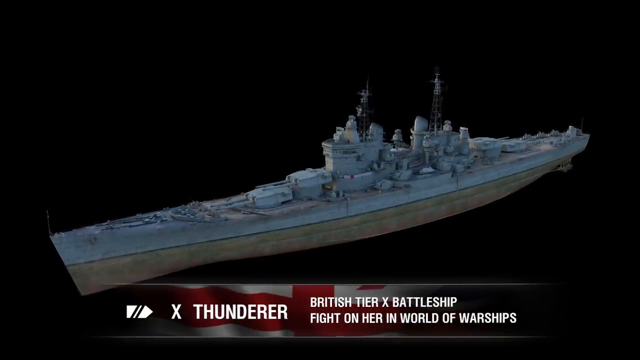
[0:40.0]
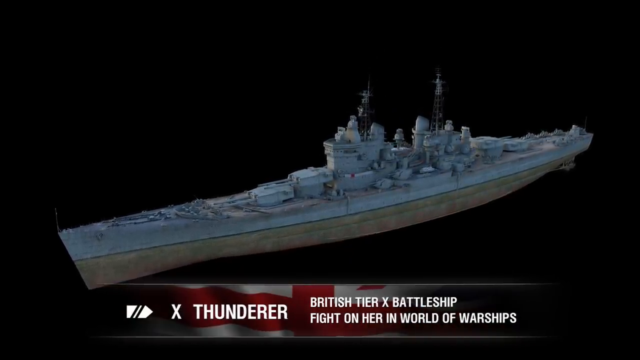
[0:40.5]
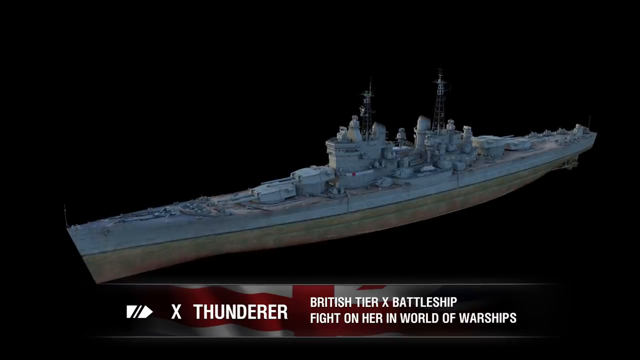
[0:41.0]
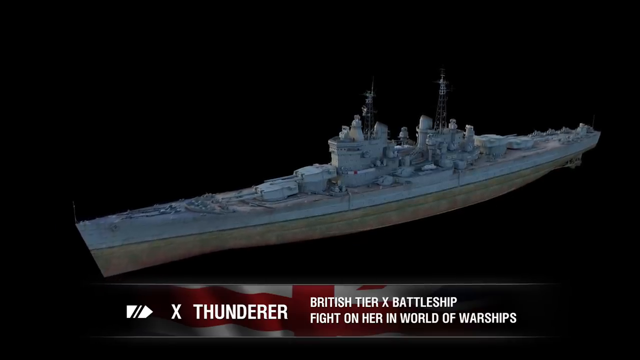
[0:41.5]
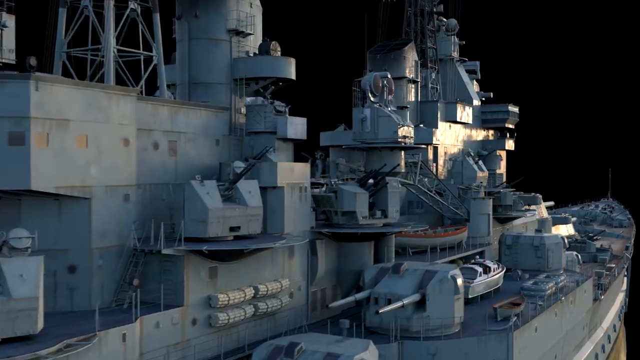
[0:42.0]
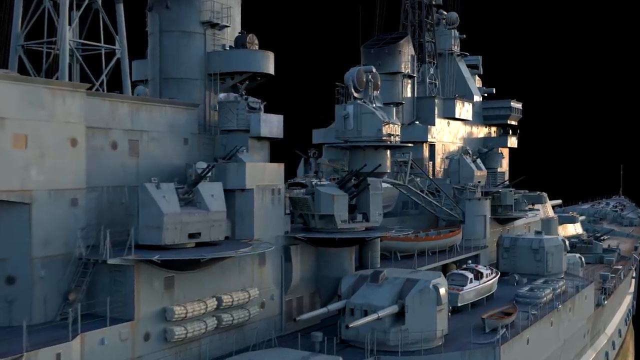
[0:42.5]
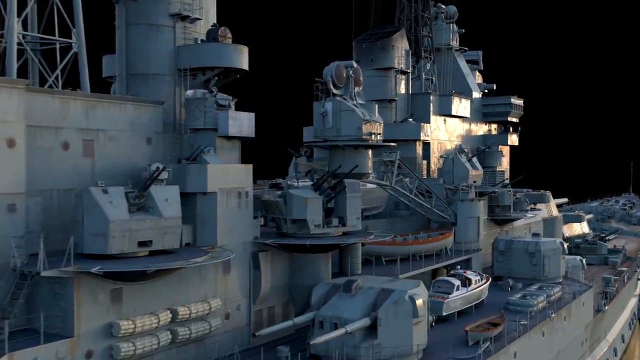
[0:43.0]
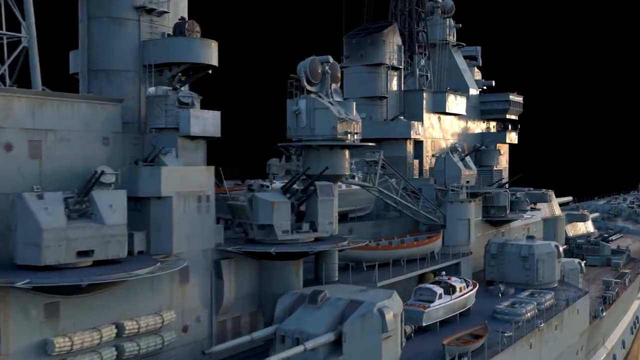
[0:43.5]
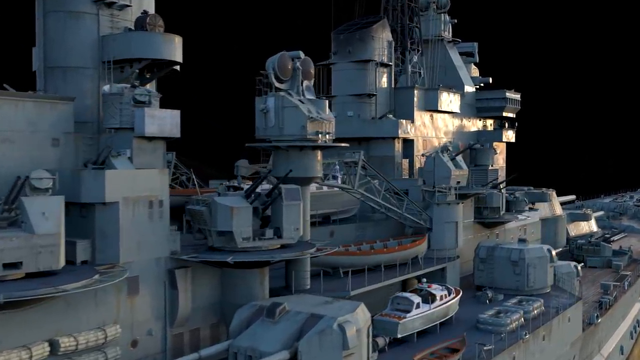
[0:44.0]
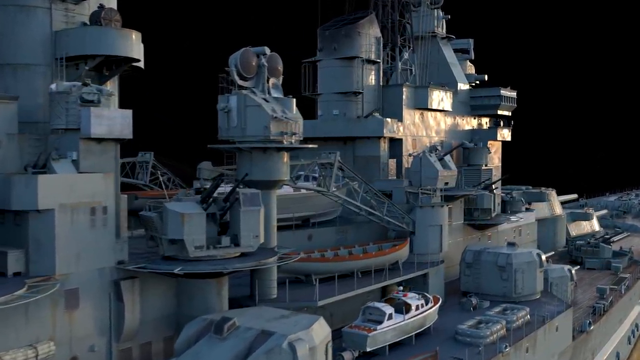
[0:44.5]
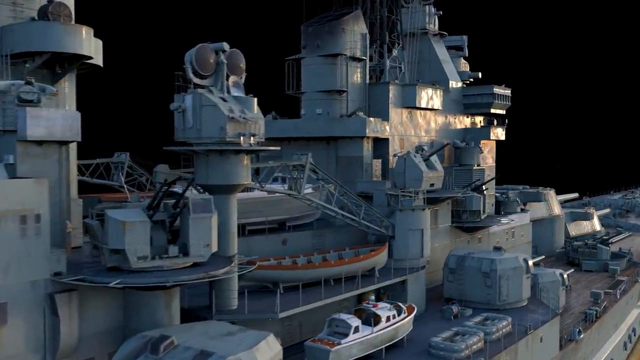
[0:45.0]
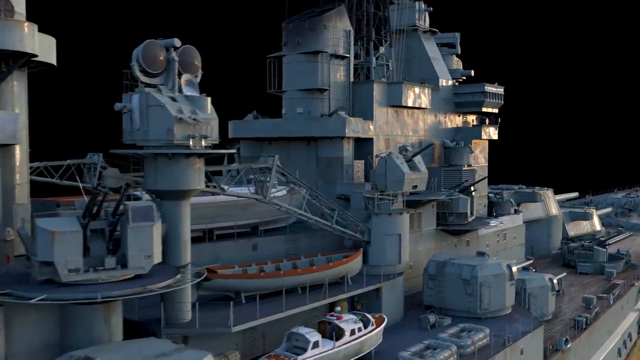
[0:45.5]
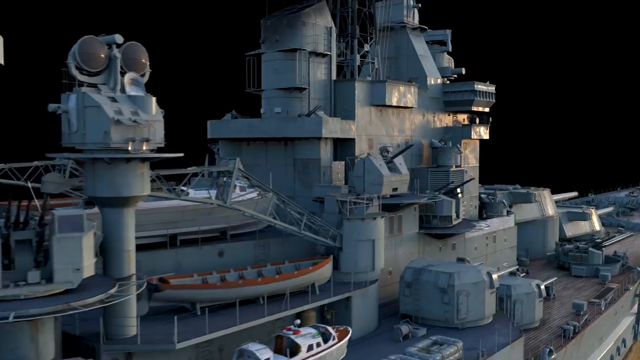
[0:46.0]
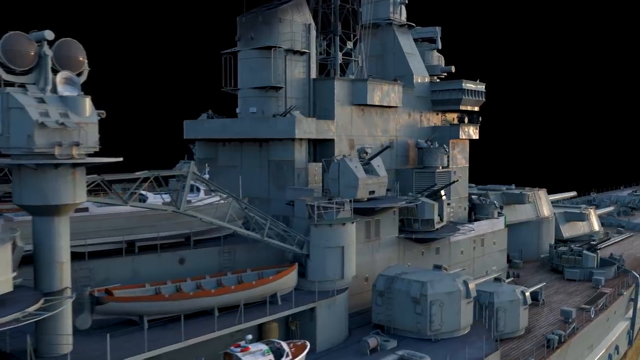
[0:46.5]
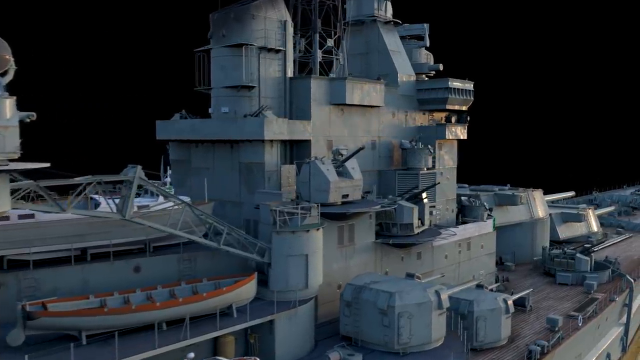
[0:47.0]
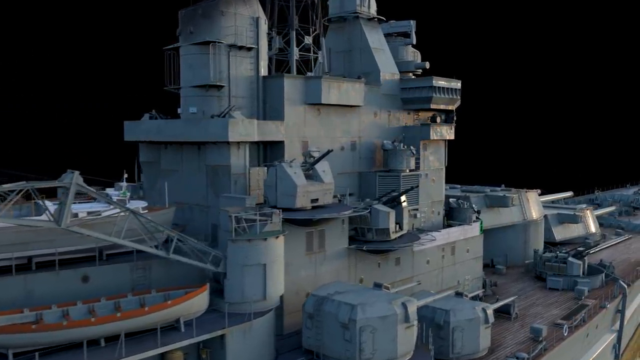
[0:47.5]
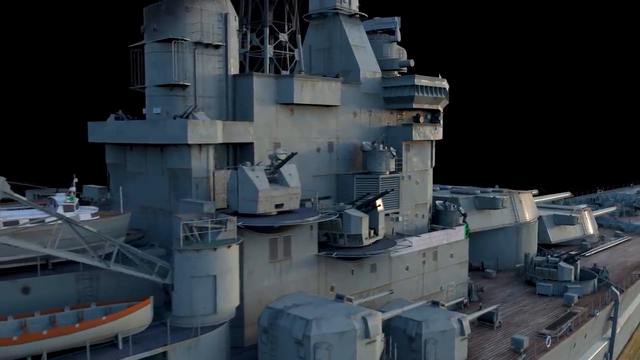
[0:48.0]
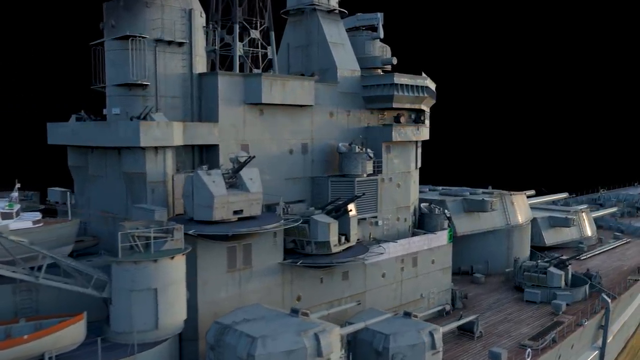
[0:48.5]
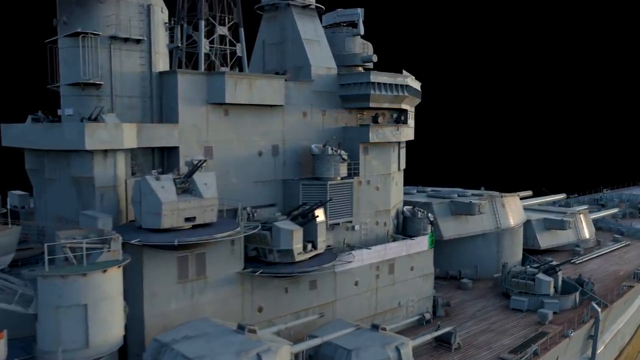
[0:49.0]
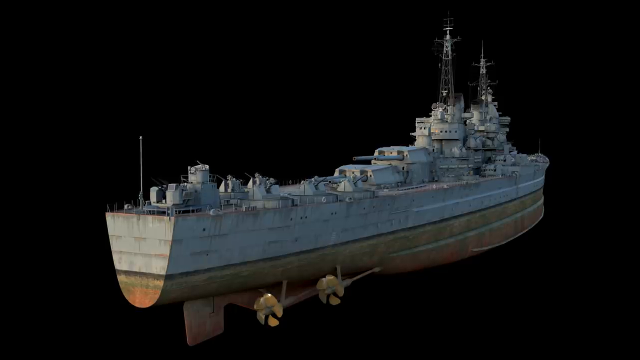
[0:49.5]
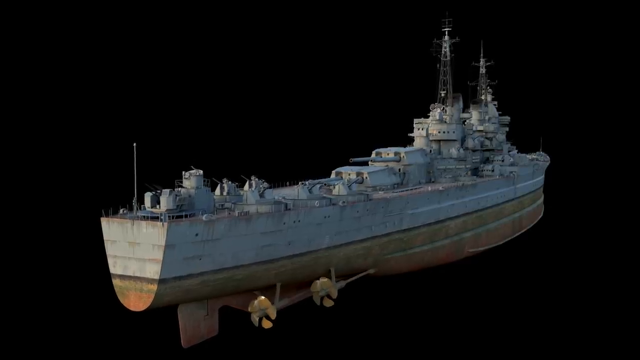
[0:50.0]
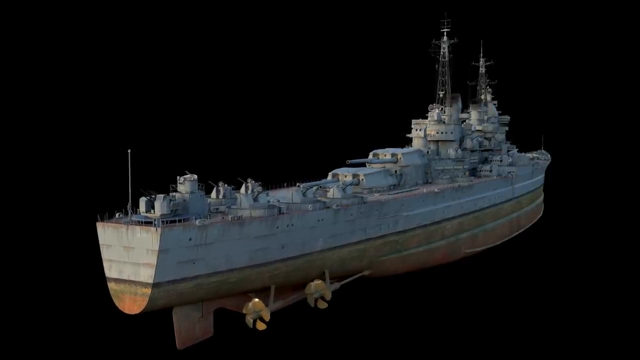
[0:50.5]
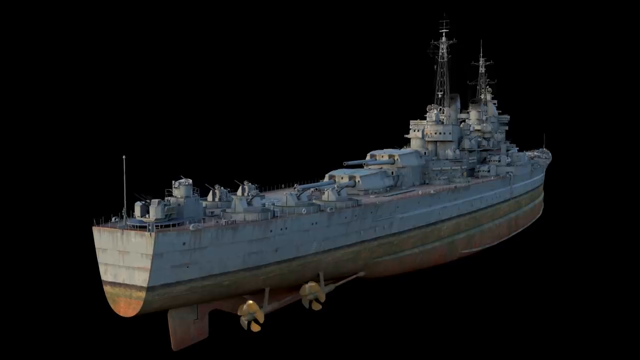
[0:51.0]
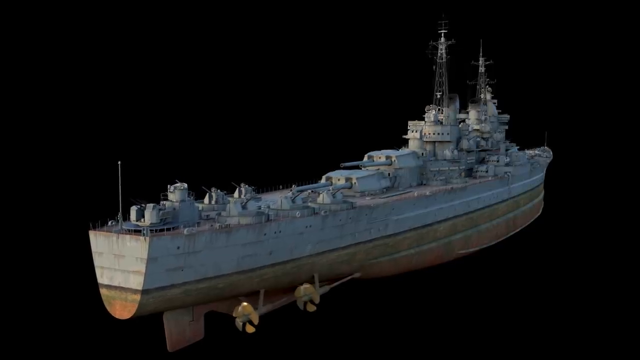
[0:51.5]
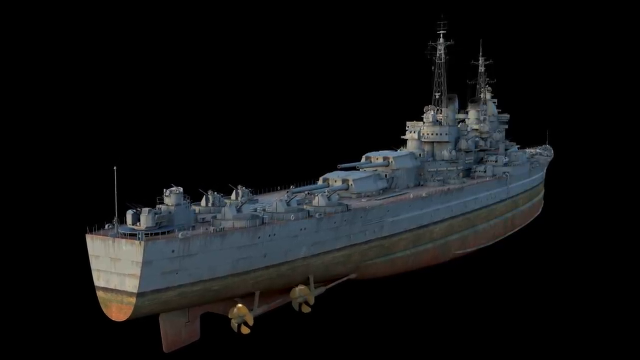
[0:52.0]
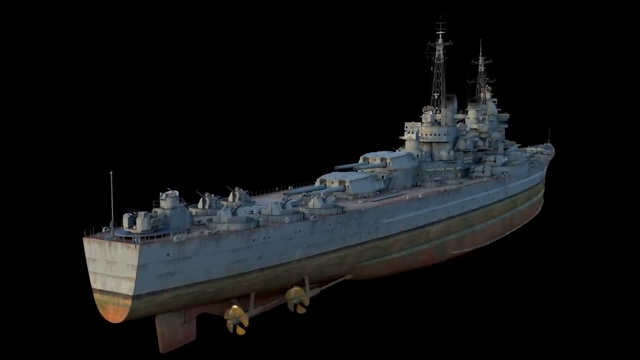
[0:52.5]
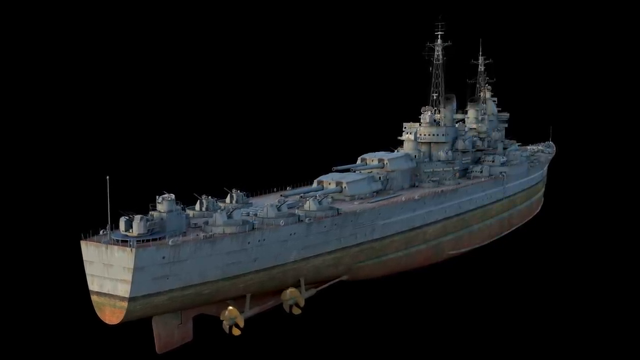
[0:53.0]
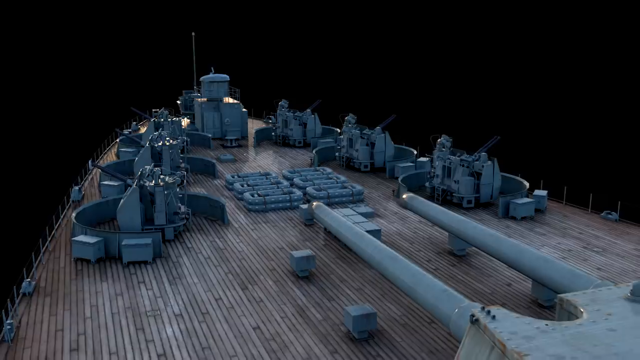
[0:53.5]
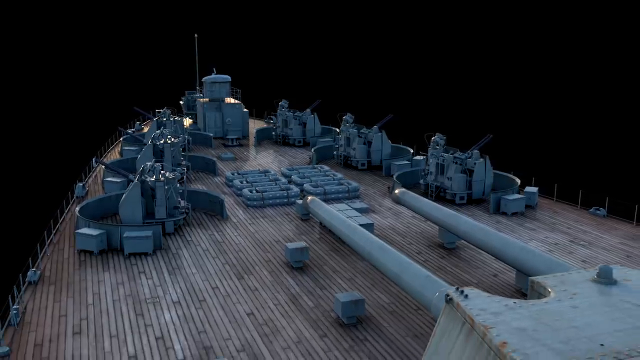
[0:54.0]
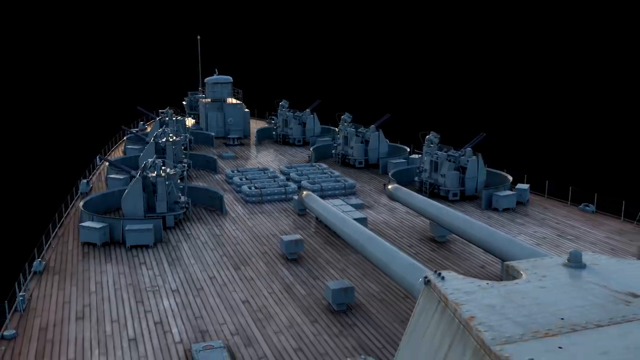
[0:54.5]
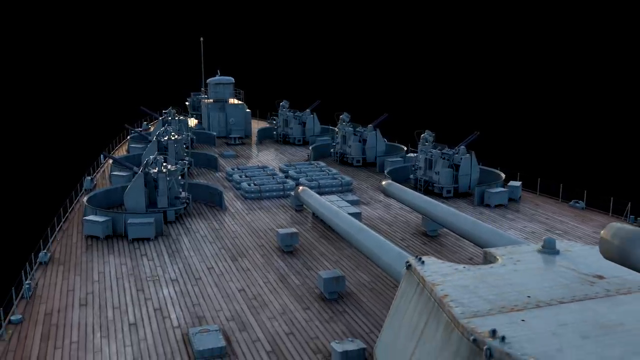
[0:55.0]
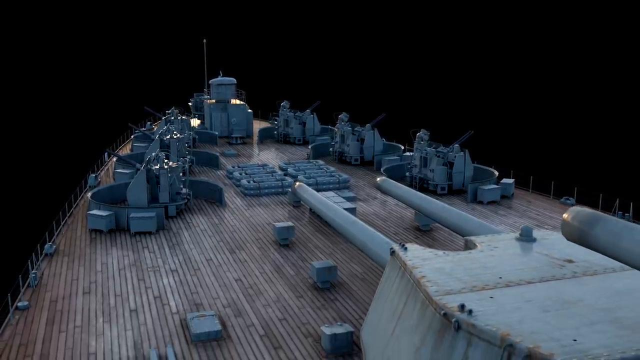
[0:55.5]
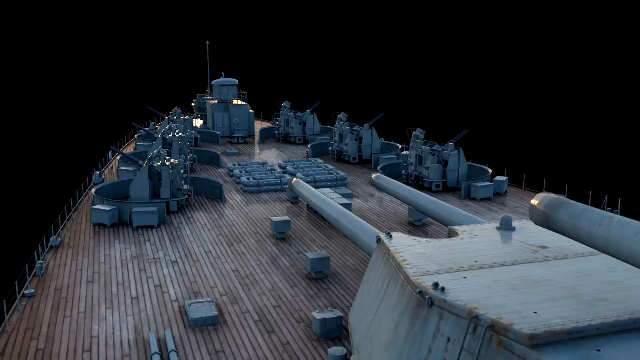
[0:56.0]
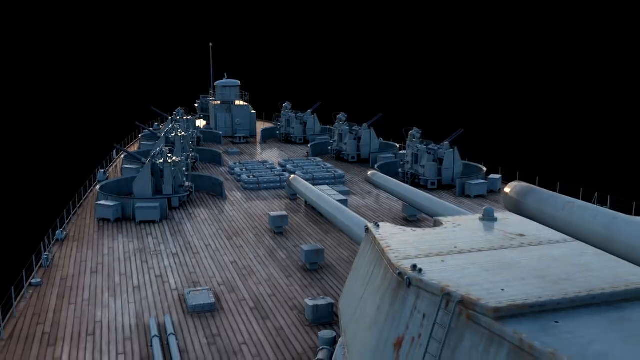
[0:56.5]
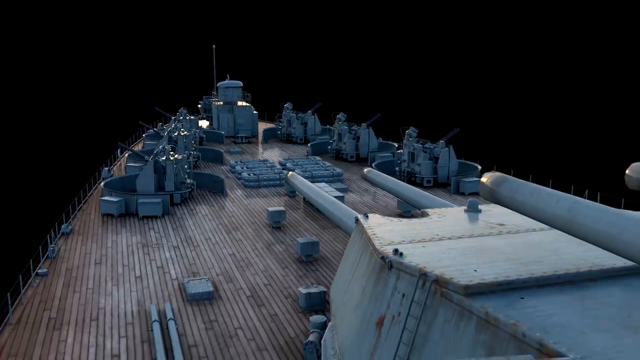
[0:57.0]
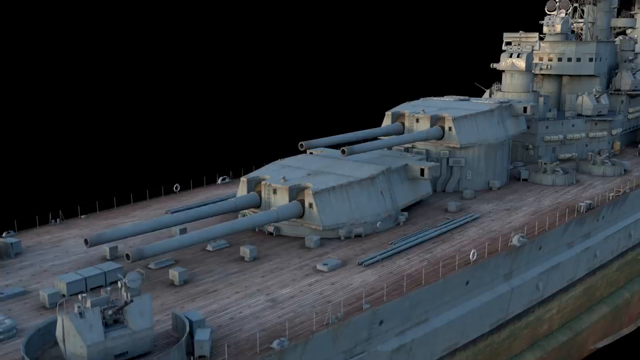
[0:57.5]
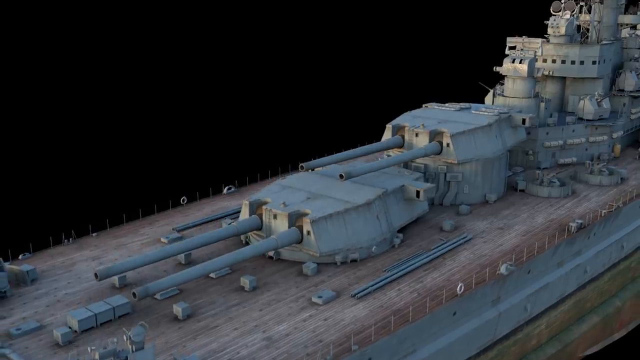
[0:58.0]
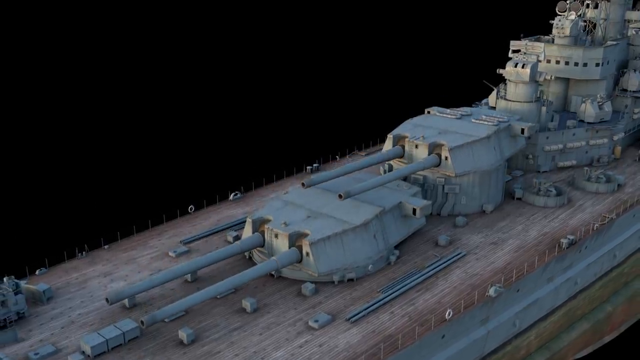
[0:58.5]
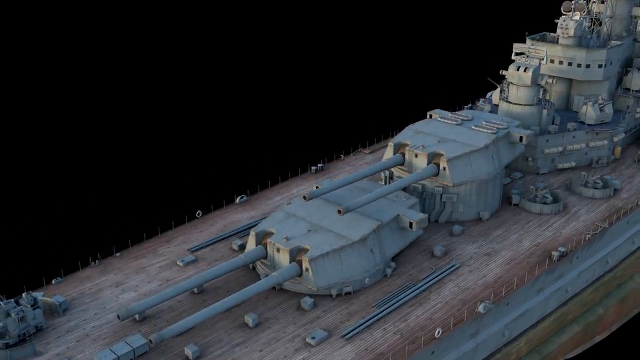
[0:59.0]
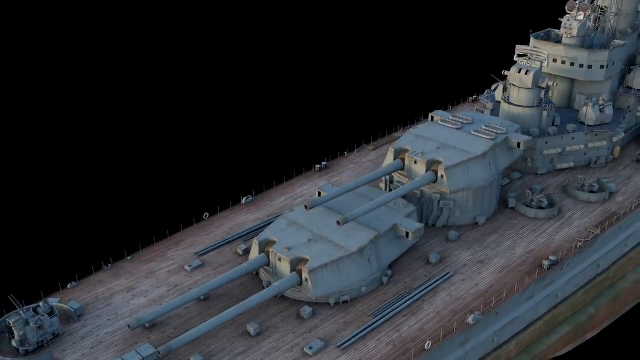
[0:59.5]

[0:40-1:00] A very detailed CGI rendering of the warship slowly pans past it, showing detailed images of everything on the outside of the ship against a very black background. The rendering then pans out to the entire warship, showing both the bottom and the top. It is extremely detailed, all in gray, with lighting coming from the left; water lines run horizontally across the middle of the ship, with brownish tones on the bottom. The rendering moves the ship slowly, then switches to the top front of the ship, where the wood deck and the armored tanks on top are visible. It pans around to the top of the ship, extremely detailed in various shades of gray.